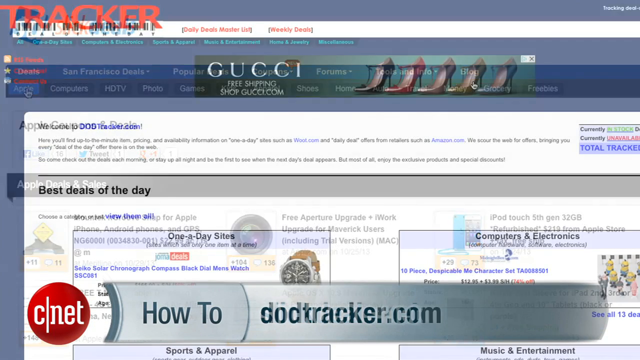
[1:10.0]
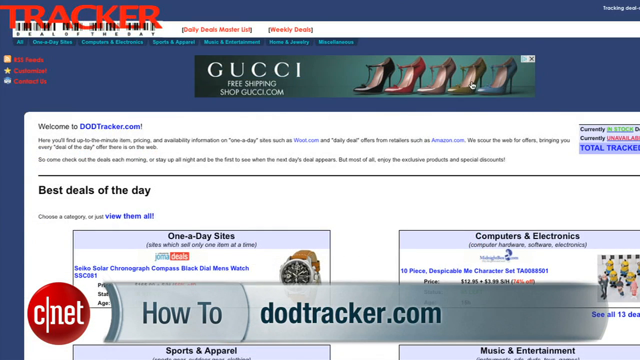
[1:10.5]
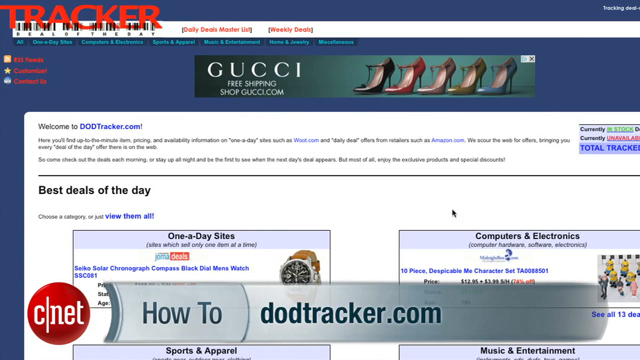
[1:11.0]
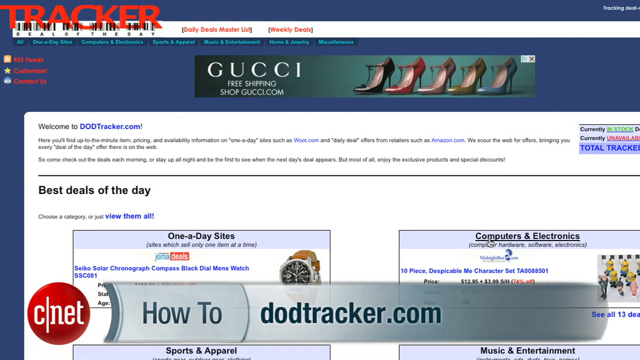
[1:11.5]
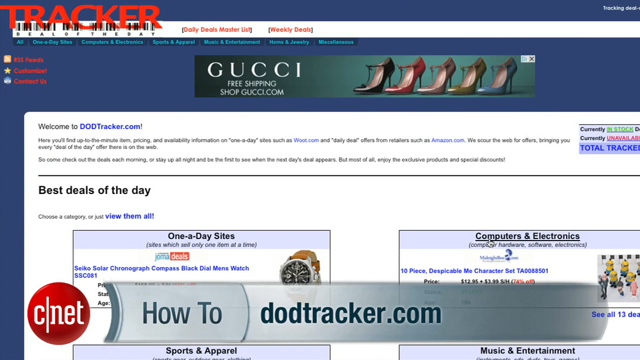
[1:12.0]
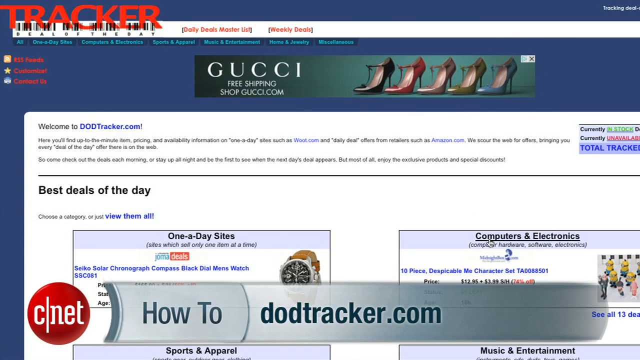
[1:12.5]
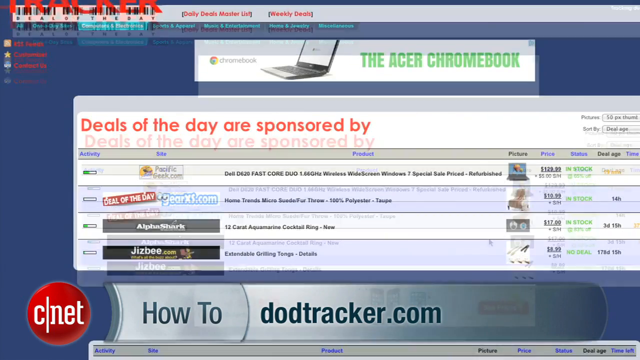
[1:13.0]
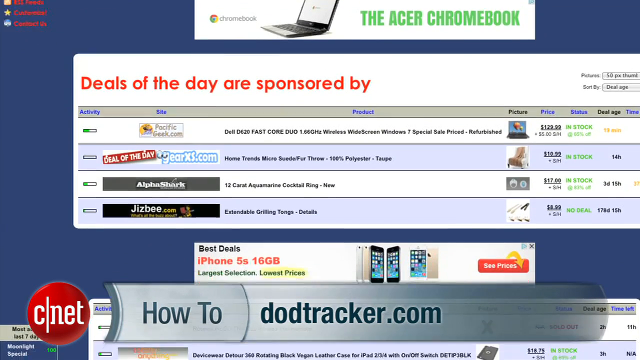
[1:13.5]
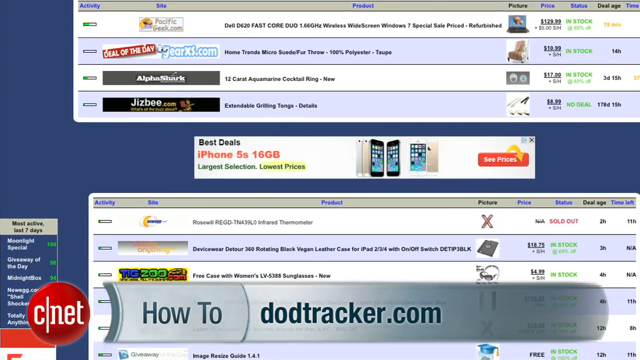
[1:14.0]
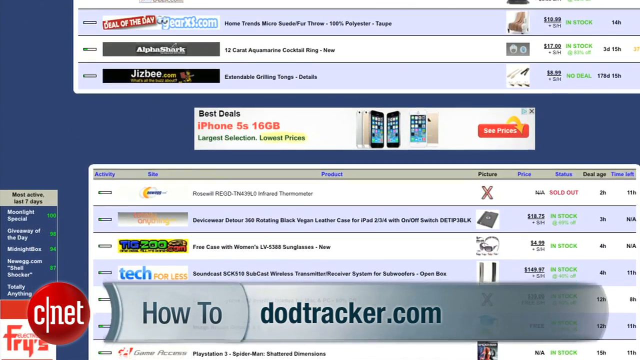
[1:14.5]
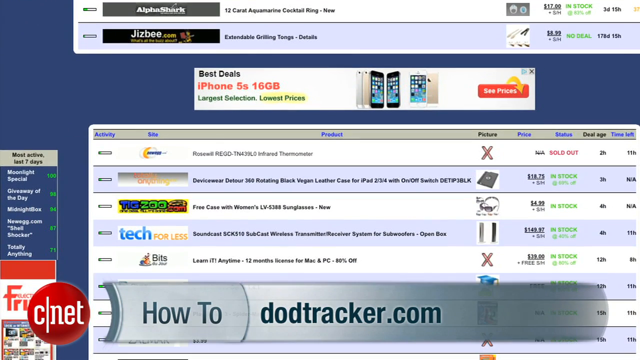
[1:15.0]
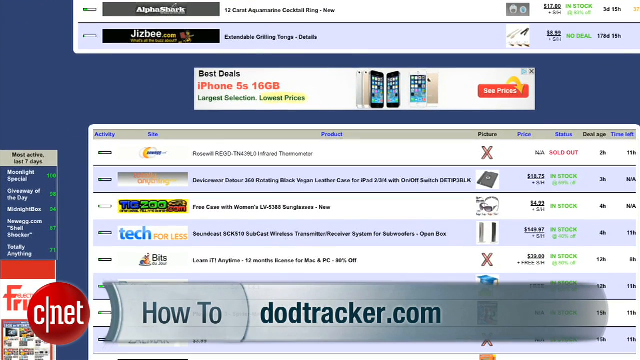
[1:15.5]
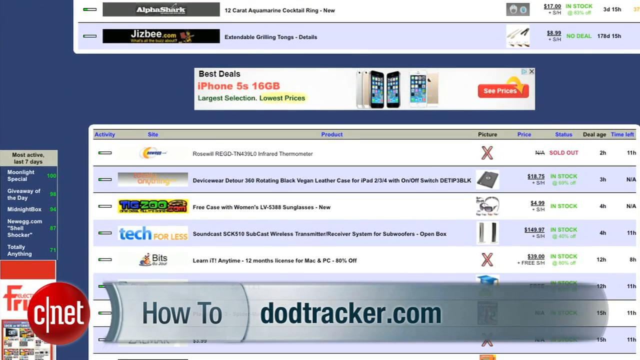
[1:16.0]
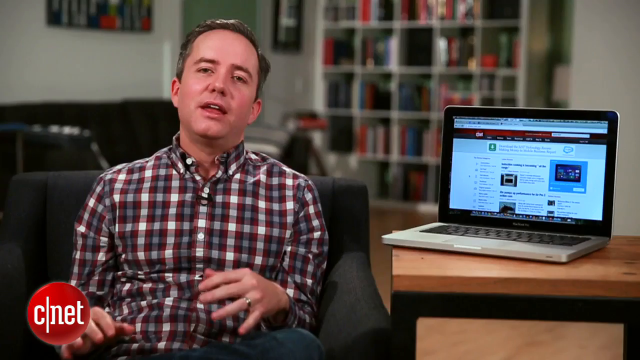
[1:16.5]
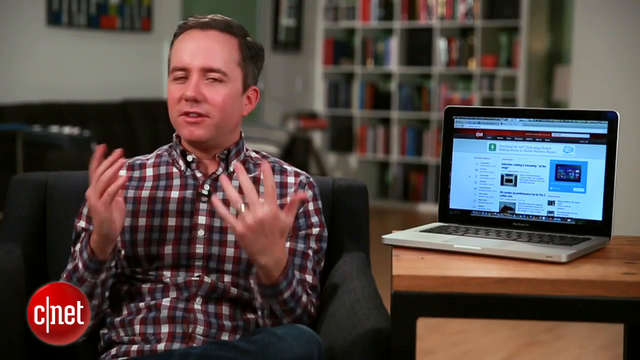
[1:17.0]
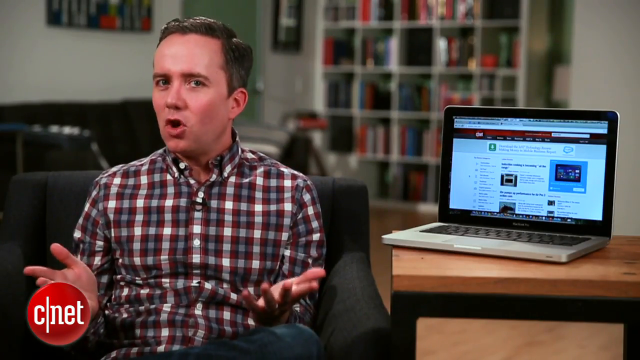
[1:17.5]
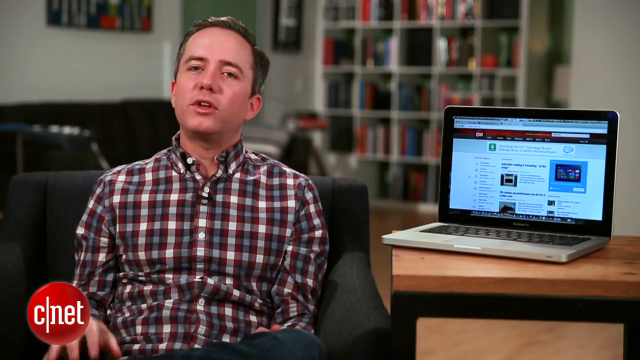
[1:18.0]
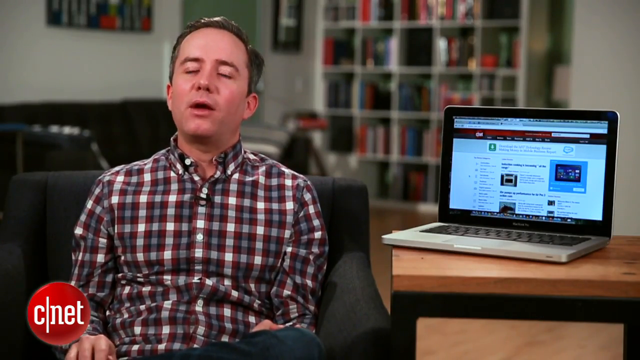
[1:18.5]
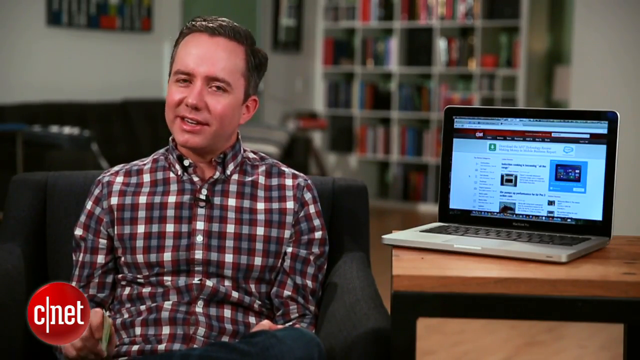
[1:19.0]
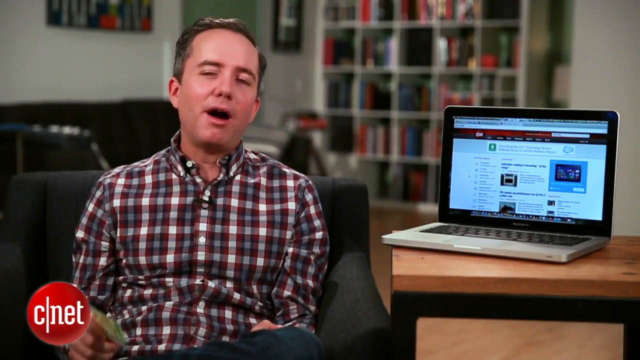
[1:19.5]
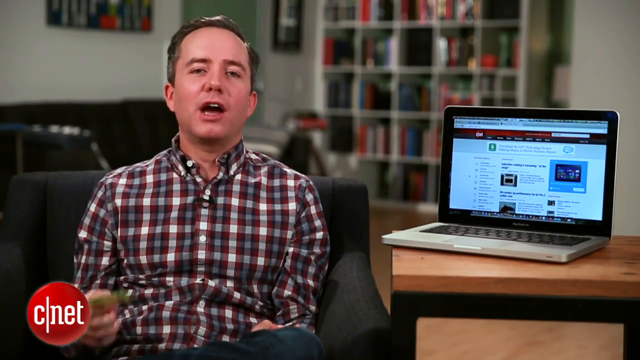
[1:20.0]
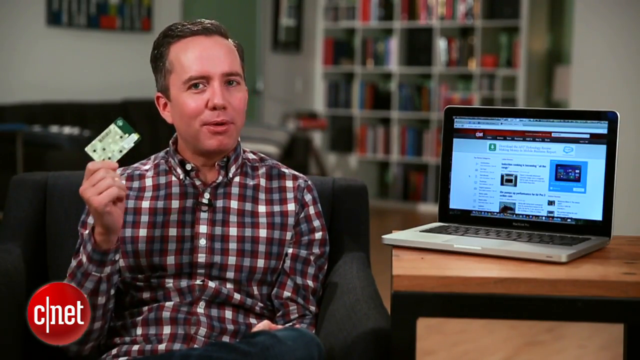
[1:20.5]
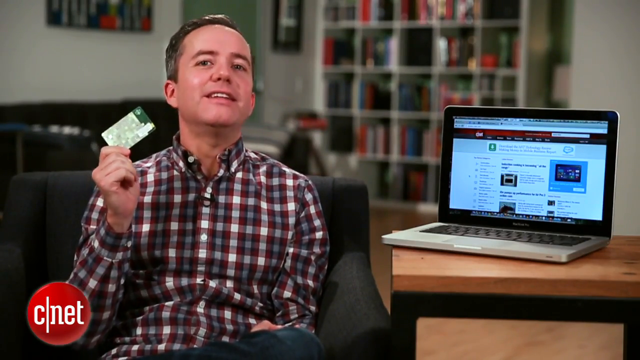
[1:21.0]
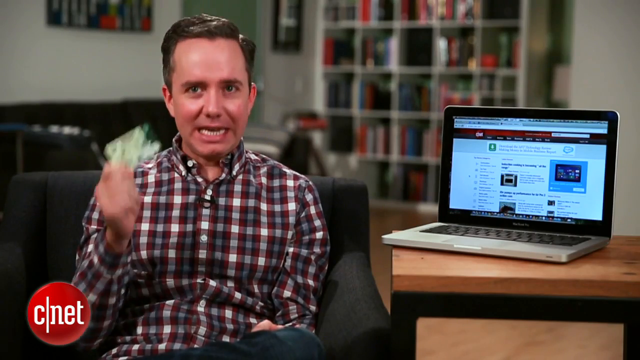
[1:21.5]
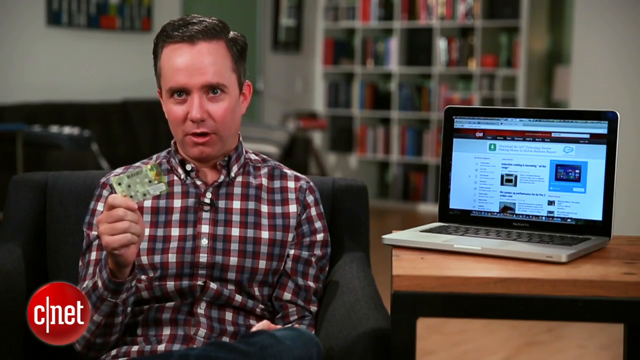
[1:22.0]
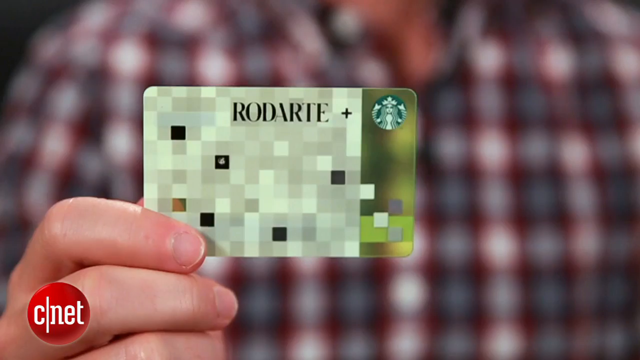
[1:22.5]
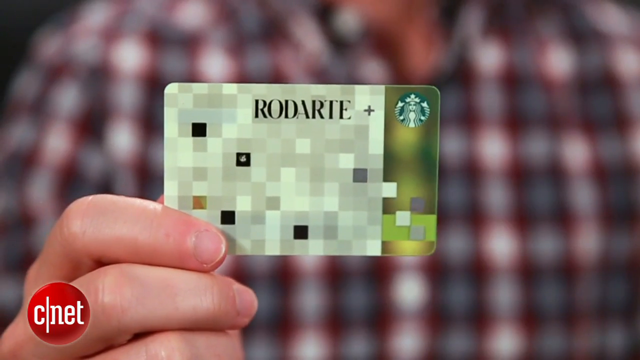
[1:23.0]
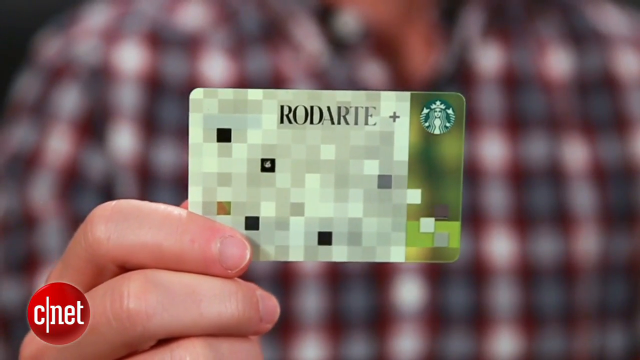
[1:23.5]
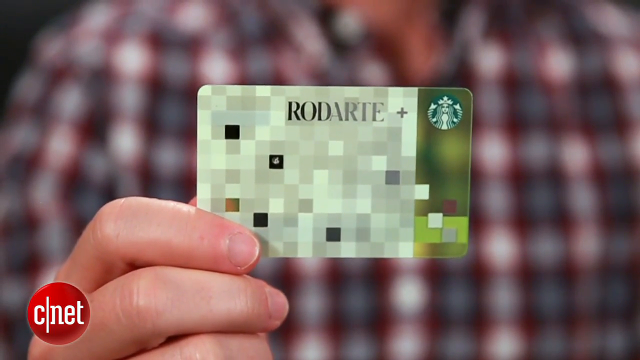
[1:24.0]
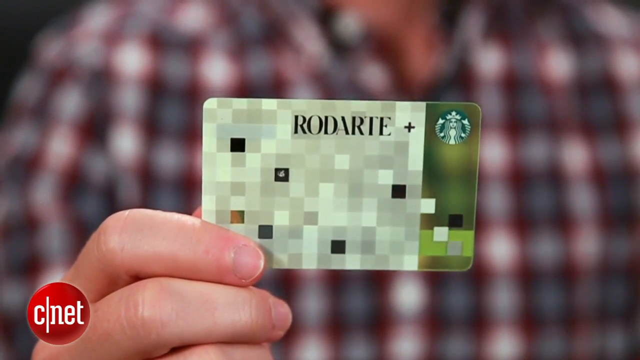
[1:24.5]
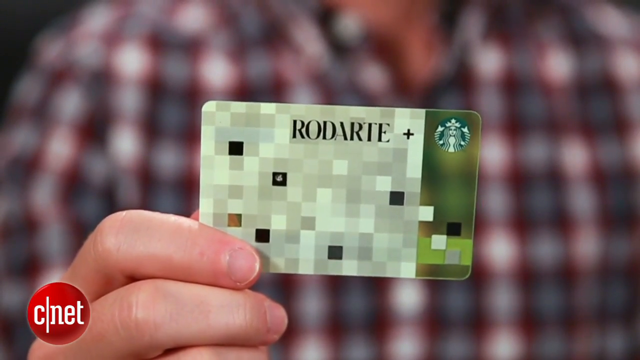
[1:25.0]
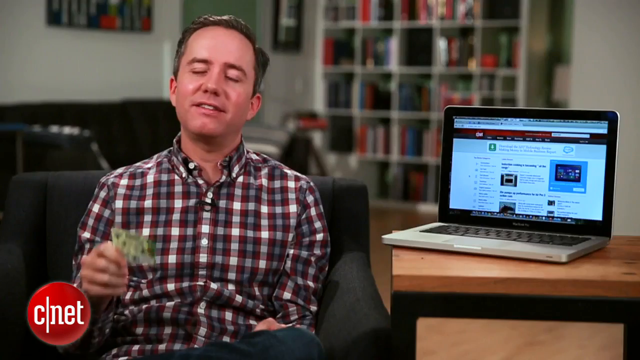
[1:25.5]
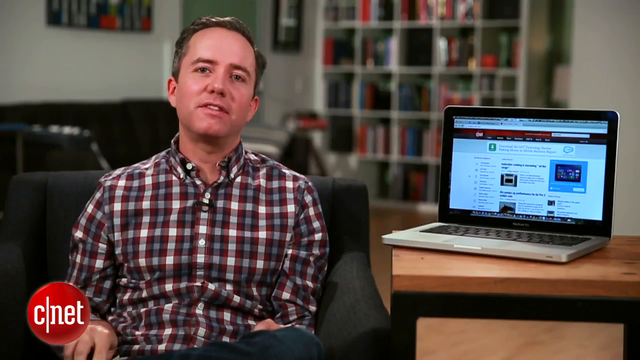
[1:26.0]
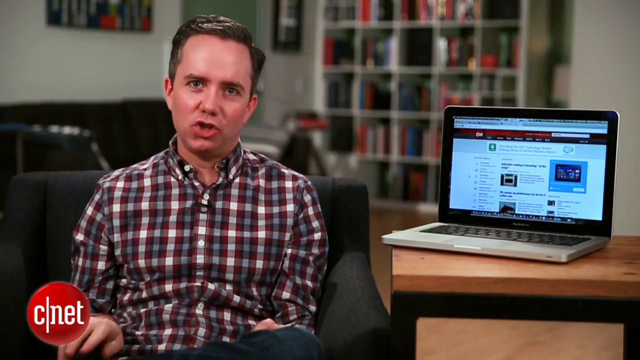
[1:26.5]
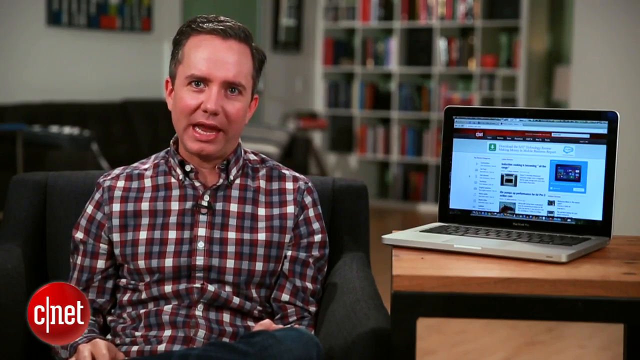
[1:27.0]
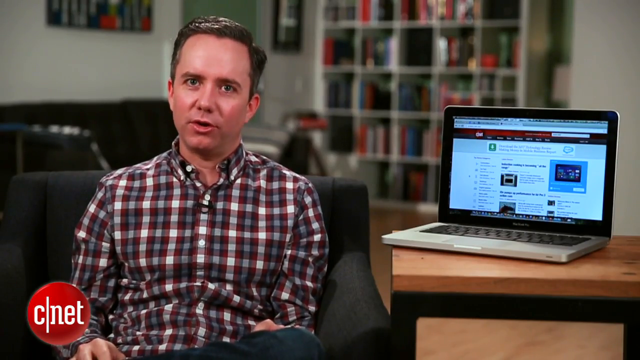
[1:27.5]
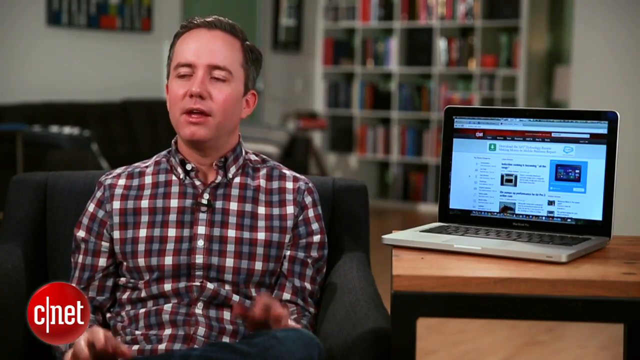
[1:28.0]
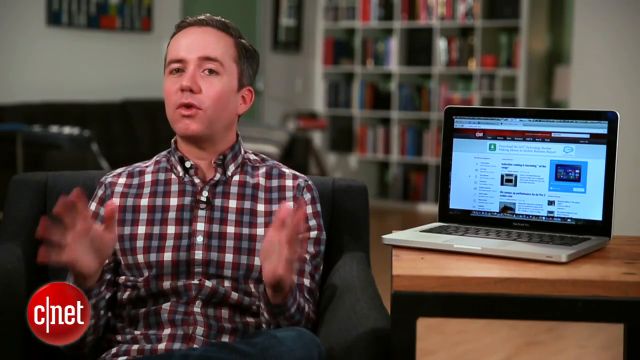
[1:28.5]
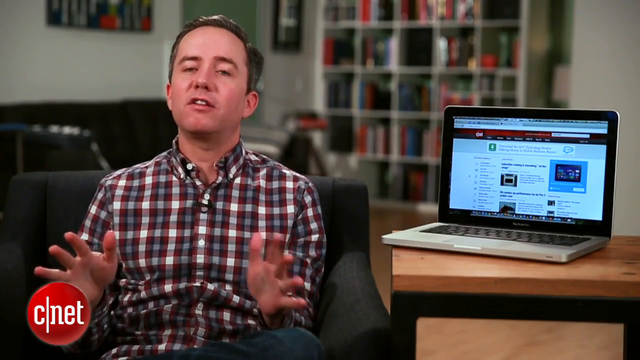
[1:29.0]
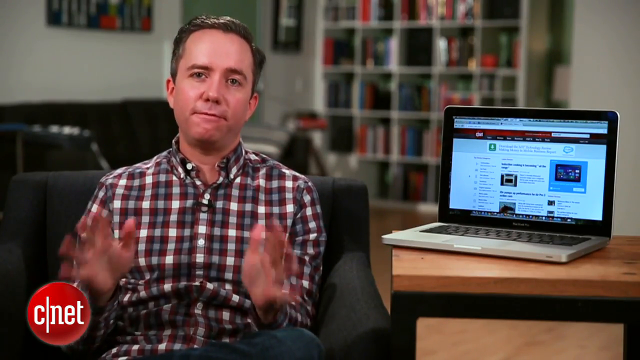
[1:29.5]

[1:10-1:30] A website called Tracker appears, with a Gucci ad at the top and many line items to compare, in a computers and electronics section with "Deals of the day are sponsored by." The video returns to the editor, who holds up in his right hand what looks like a card reading "Rodarte Plus" with a Starbucks logo. It is a green card with a square geometric type of design. He speaks from what looks like a residential area, apparently some sort of living room.